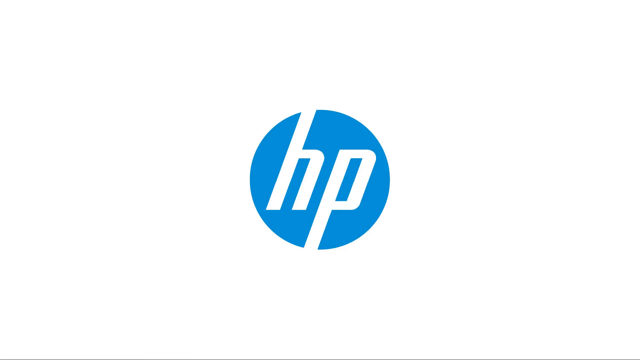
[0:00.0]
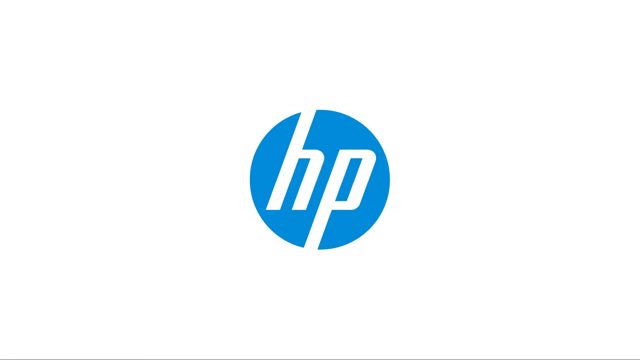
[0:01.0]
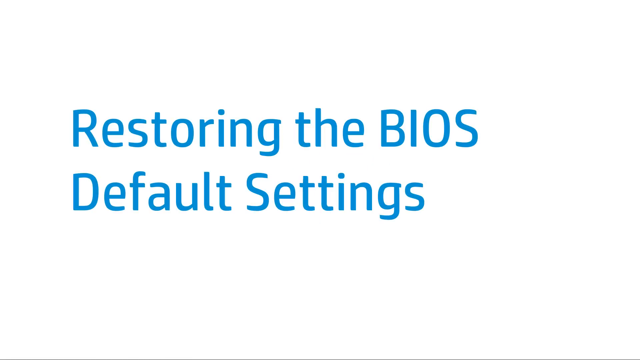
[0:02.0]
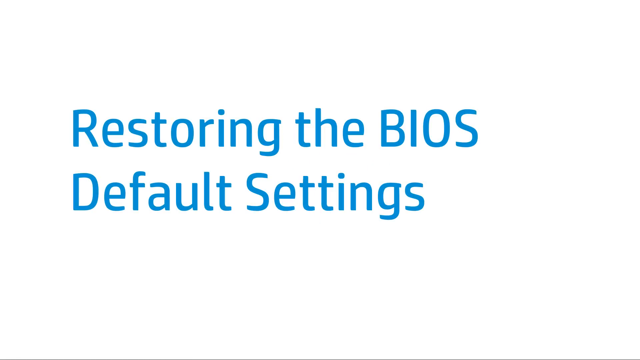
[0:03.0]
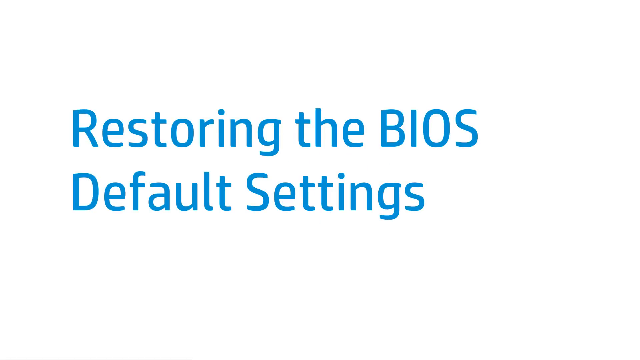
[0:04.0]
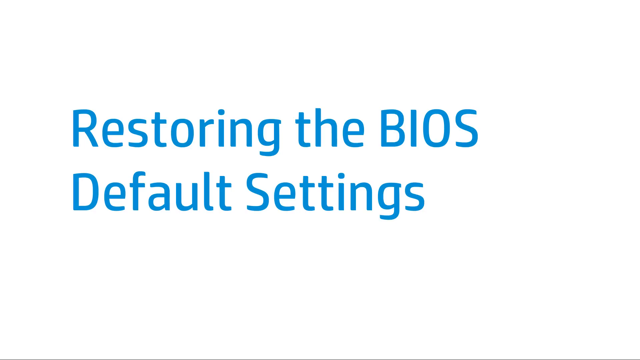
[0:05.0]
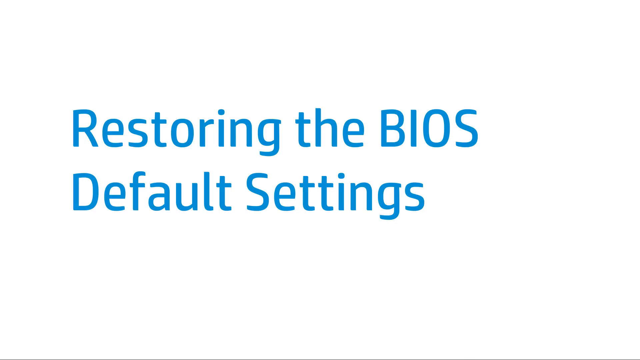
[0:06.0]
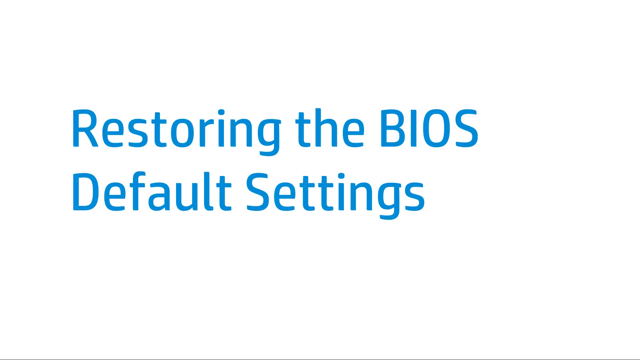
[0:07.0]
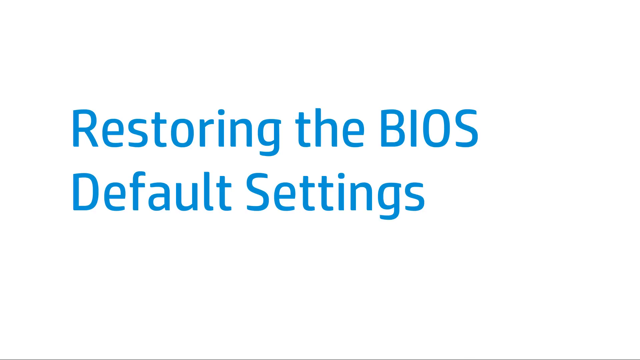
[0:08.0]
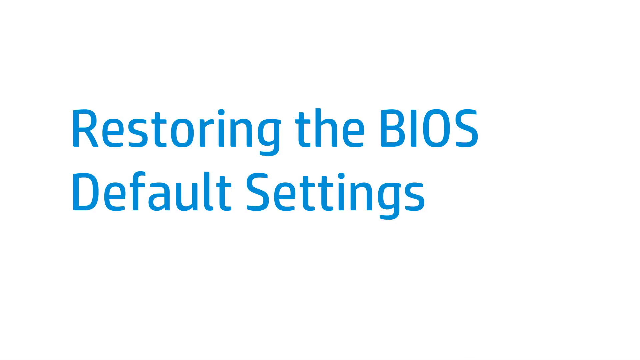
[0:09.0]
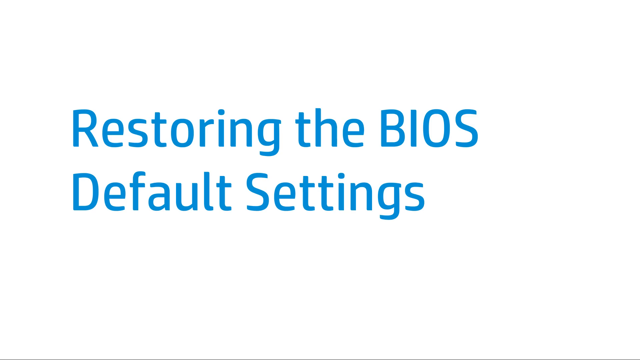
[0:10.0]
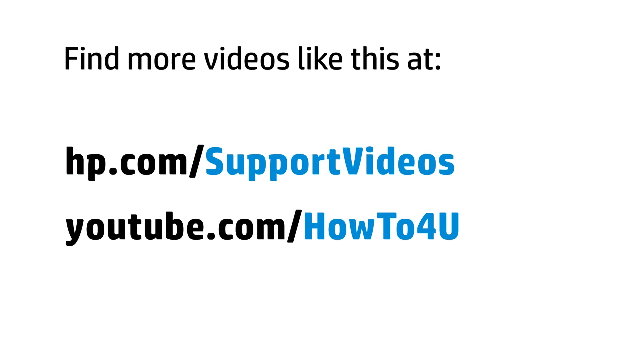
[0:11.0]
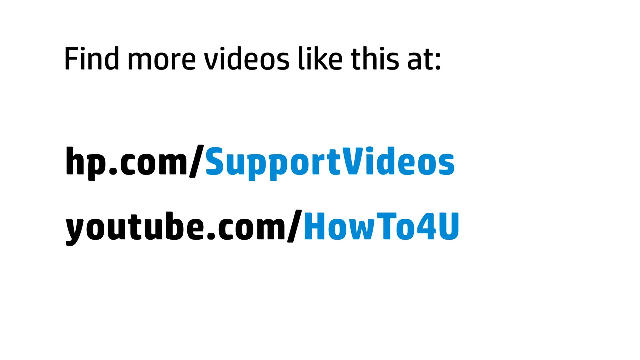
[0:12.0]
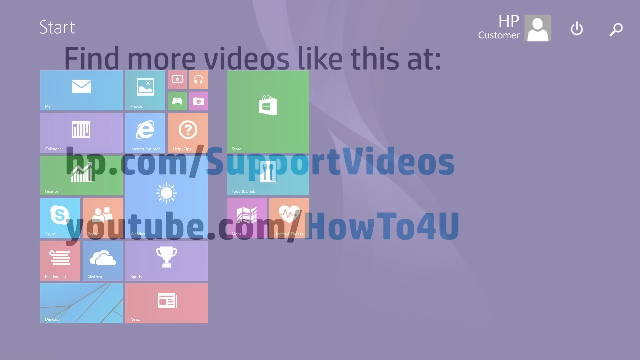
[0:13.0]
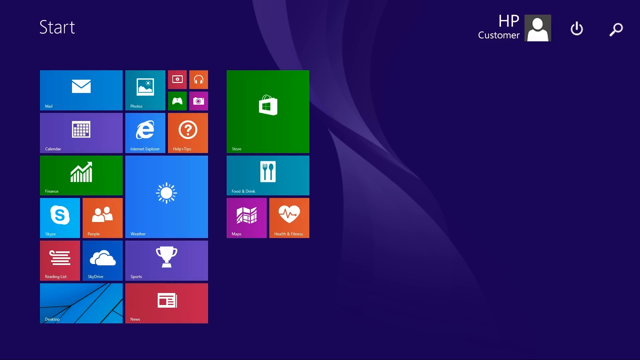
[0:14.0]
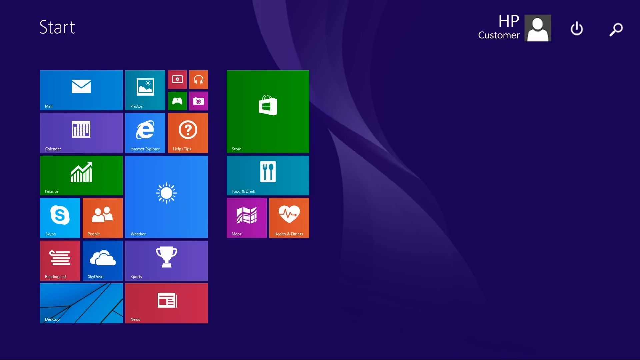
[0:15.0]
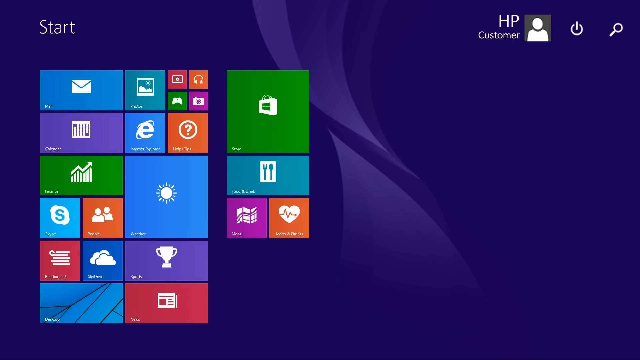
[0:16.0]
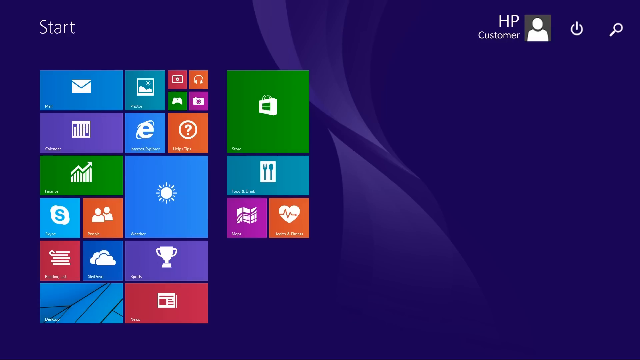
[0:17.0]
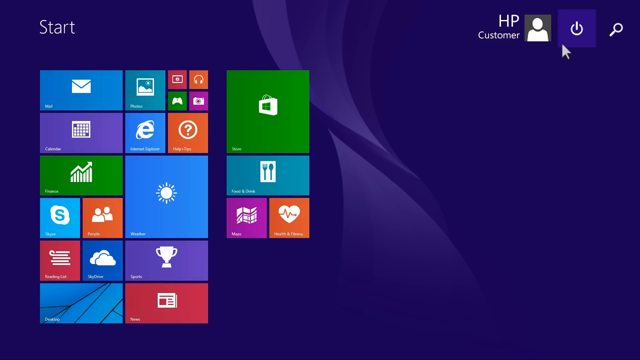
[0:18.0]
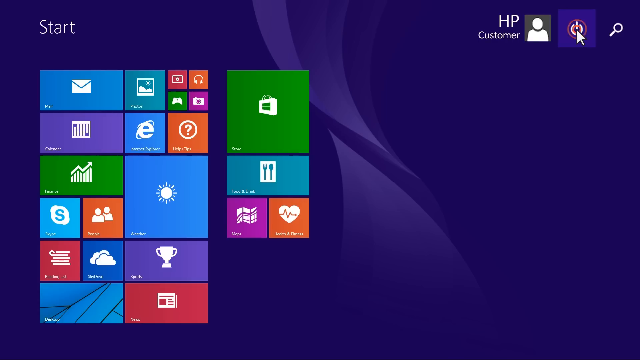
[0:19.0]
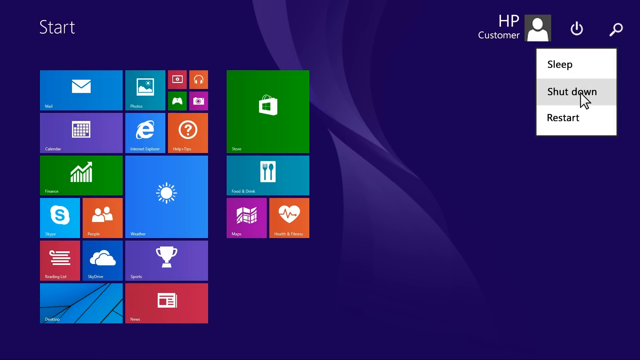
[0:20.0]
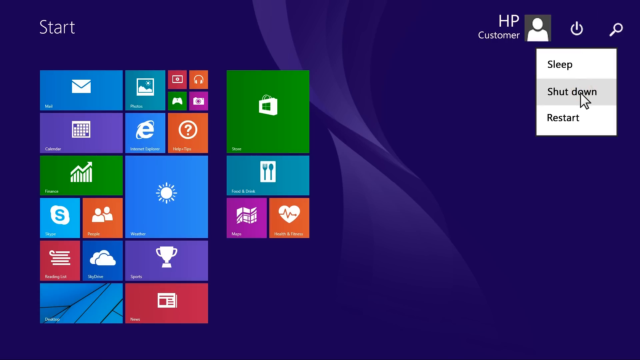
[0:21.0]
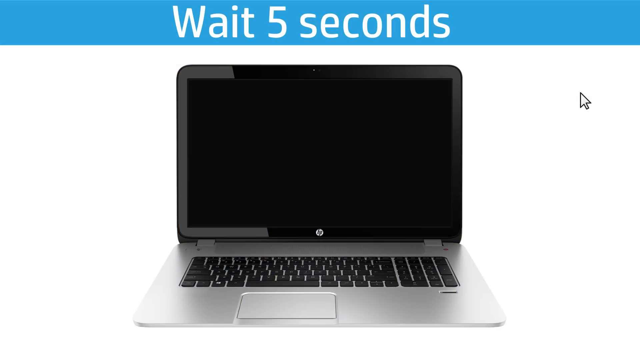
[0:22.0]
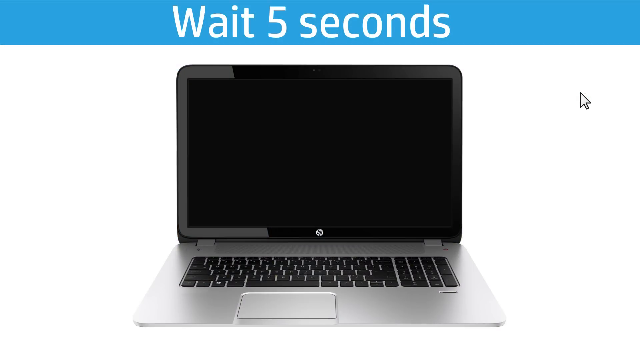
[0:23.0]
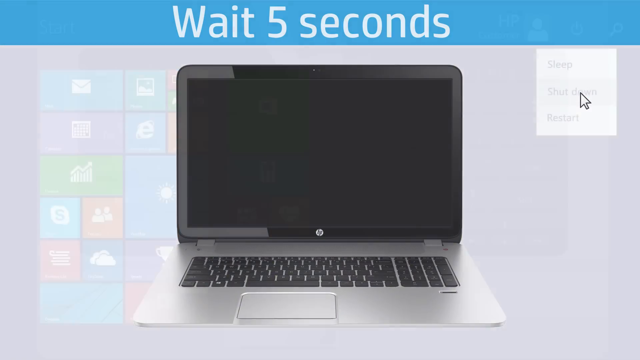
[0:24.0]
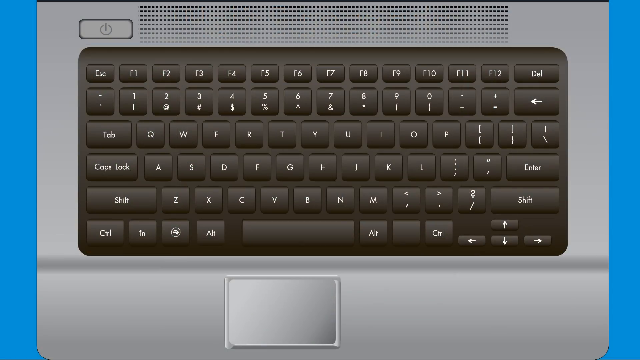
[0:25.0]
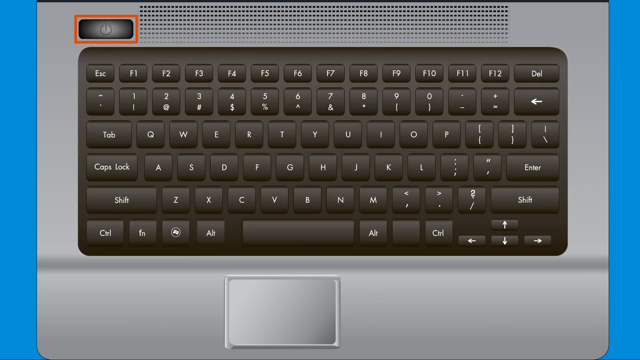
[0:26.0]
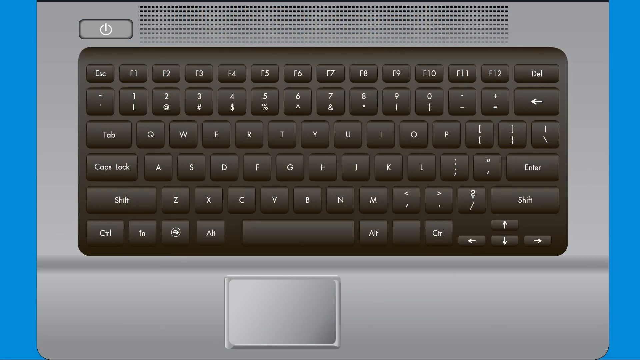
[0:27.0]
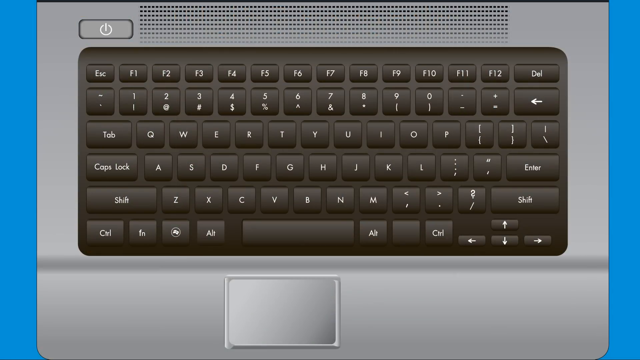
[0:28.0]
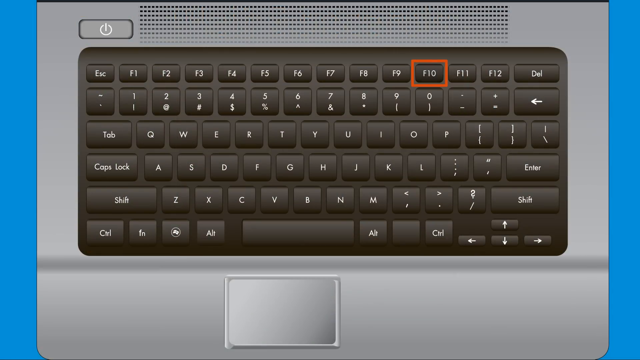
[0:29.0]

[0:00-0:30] The video opens with a blue HP logo in the center of the screen on a white background. Next, the screen shows "restoring the BIOS default settings" with nothing else on it, and it stays unchanged for a few seconds. The next slide of the presentation has three lines: the first says "find more videos like this at", the second has a link to the HP website, and the third has a link to a YouTube channel. The screen then changes to a video of a desktop with many icons, apparently Windows. The mouse moves to the top right to hit the power icon and selects the shutdown option. A slide then says "wait five seconds", with a picture of a laptop at the bottom. Next, a picture of the laptop's keyboard appears with the power button surrounded by an orange rectangle, and then the F10 key is surrounded by an orange rectangle.